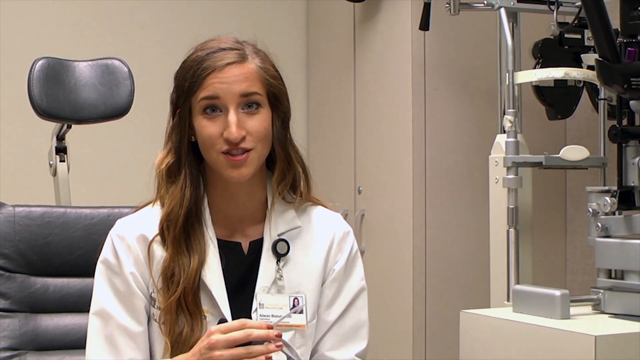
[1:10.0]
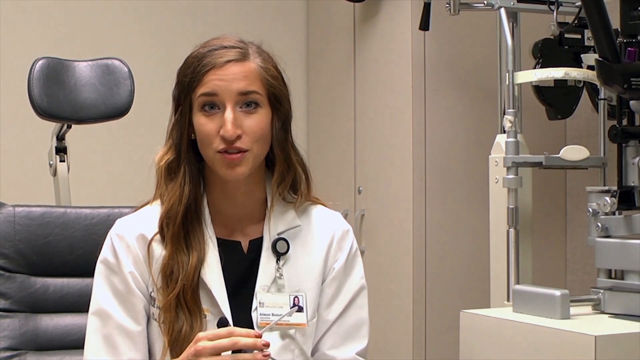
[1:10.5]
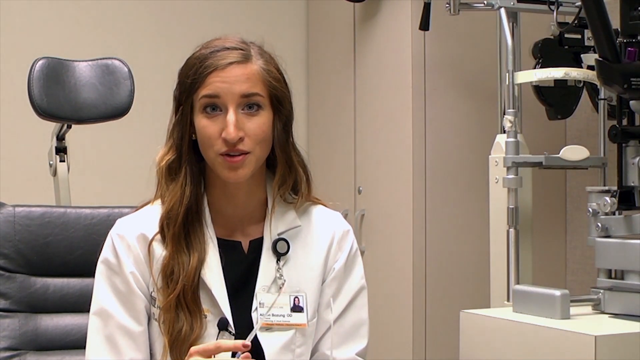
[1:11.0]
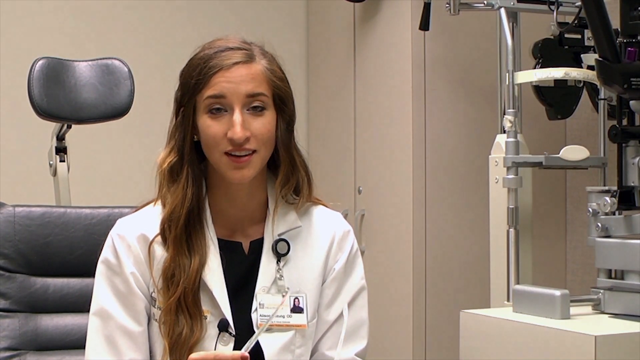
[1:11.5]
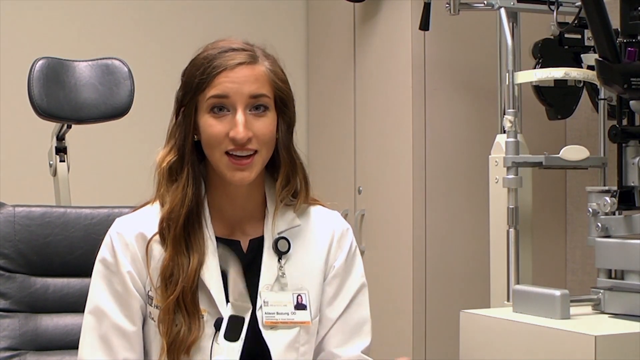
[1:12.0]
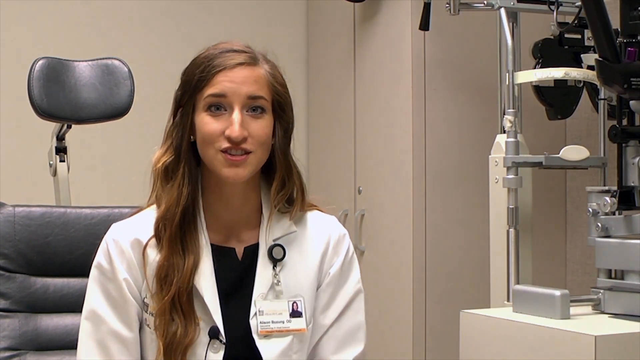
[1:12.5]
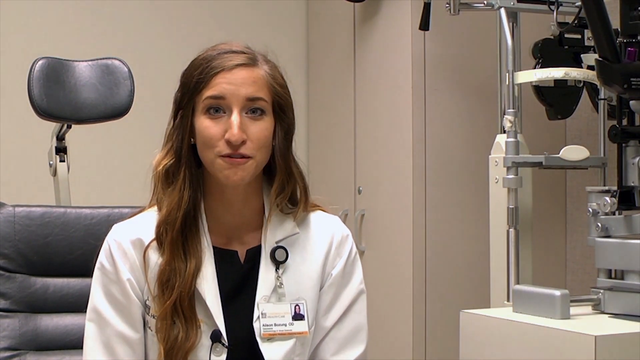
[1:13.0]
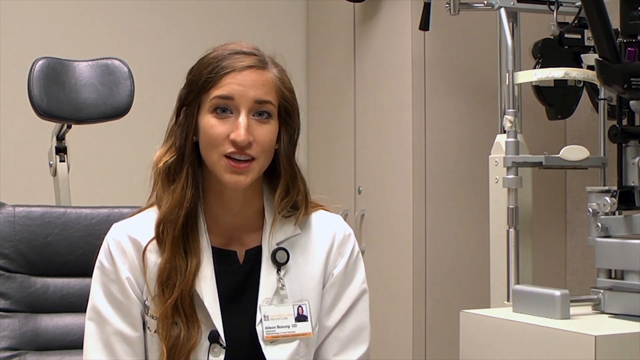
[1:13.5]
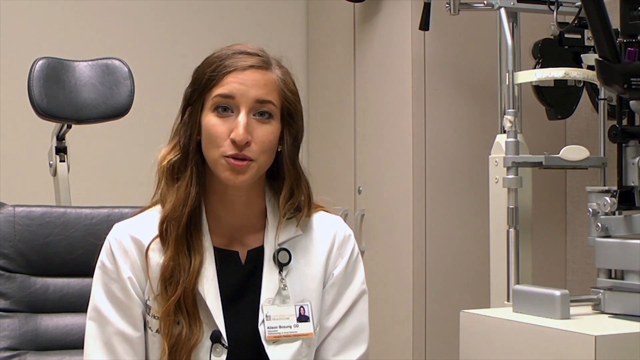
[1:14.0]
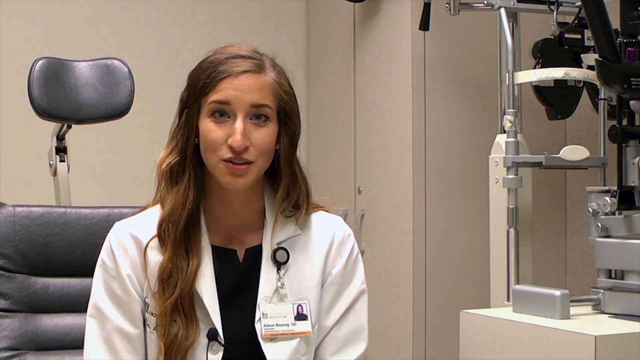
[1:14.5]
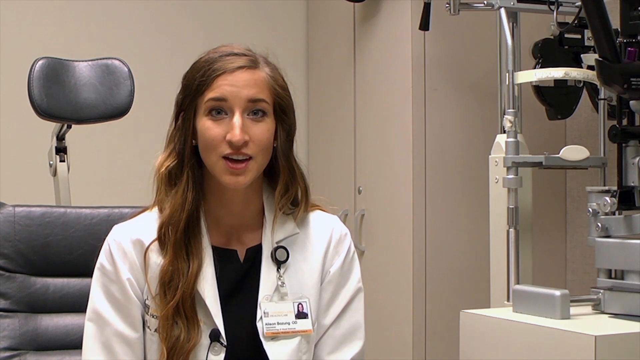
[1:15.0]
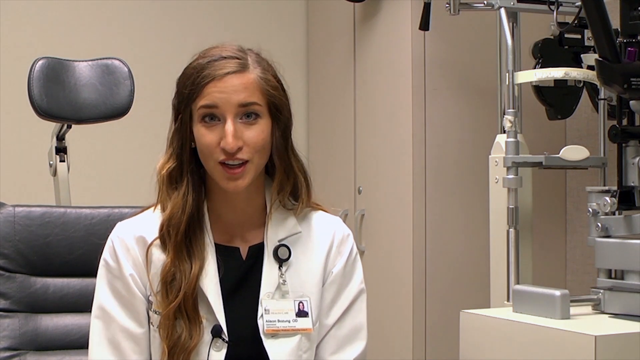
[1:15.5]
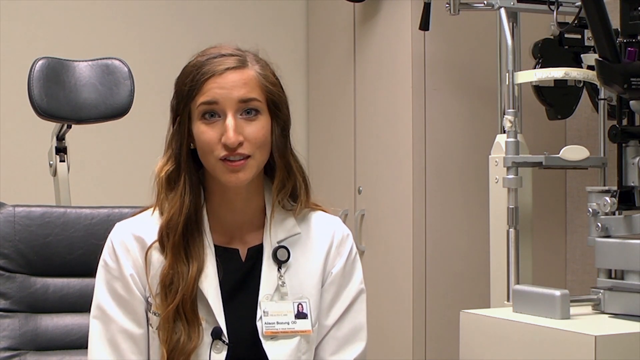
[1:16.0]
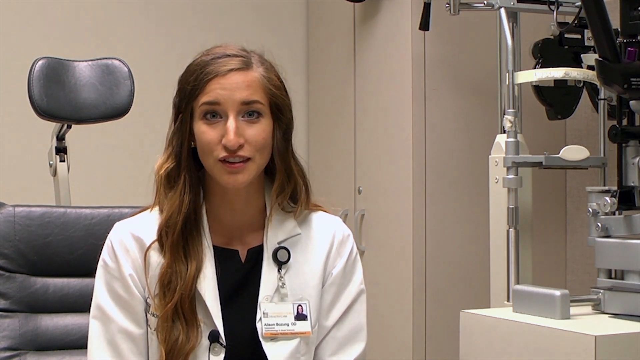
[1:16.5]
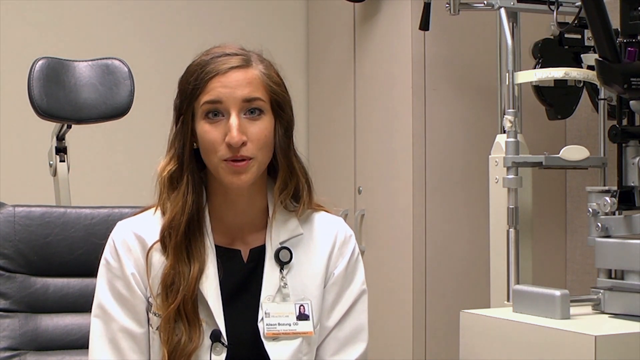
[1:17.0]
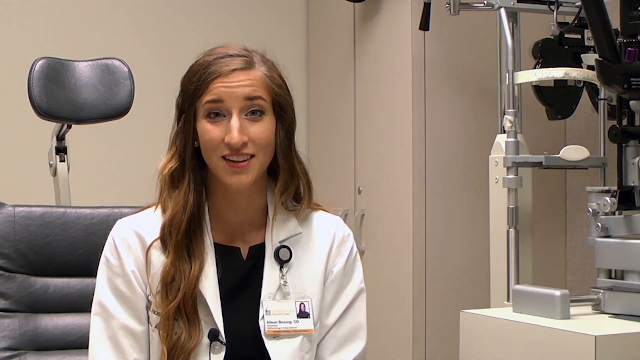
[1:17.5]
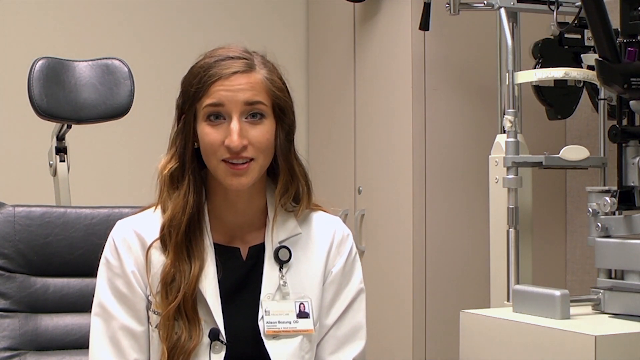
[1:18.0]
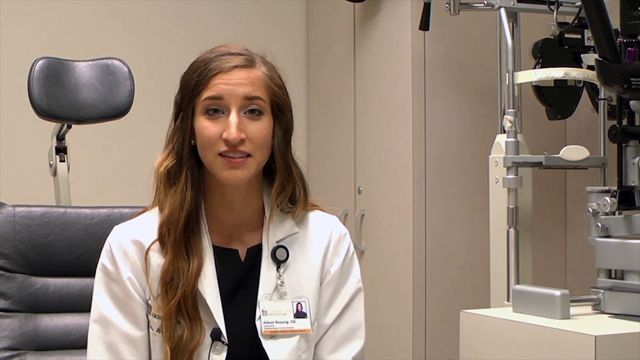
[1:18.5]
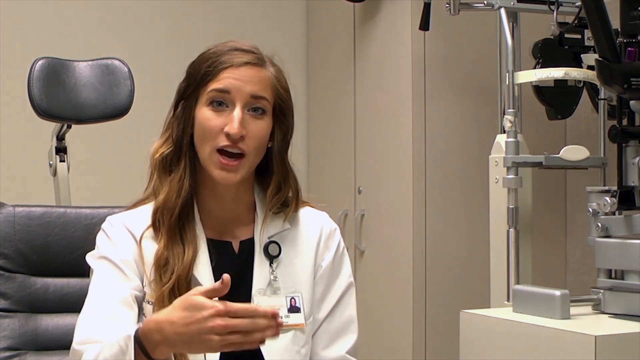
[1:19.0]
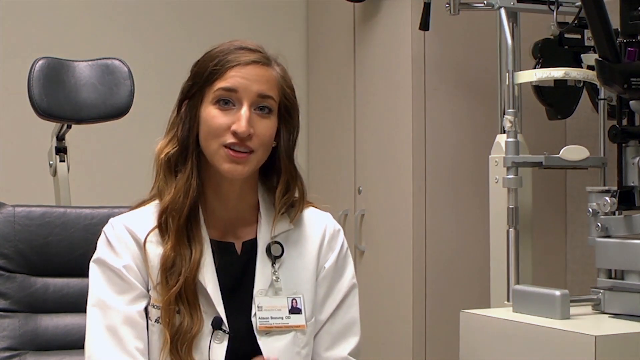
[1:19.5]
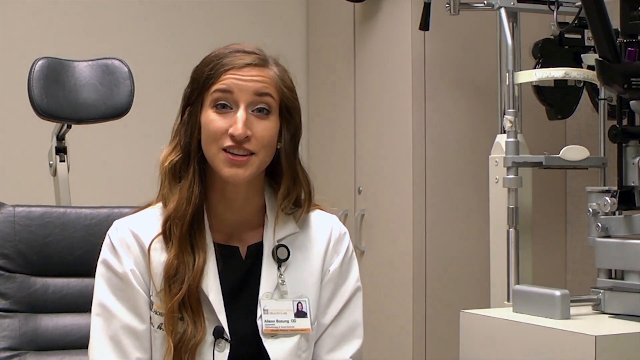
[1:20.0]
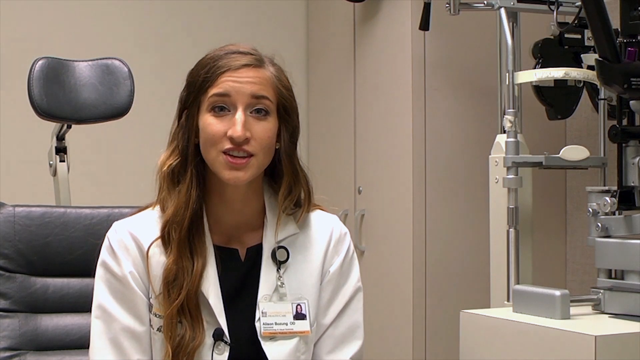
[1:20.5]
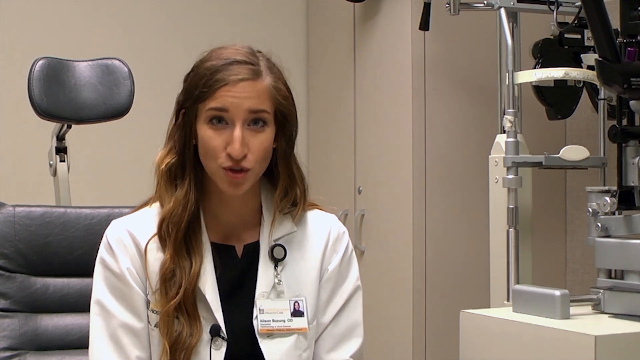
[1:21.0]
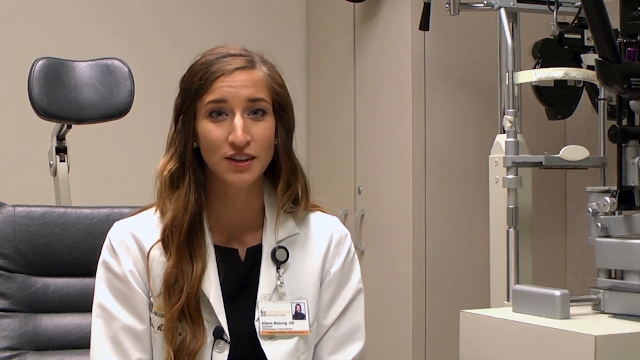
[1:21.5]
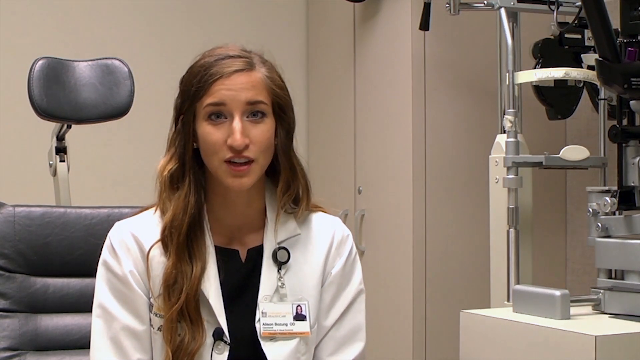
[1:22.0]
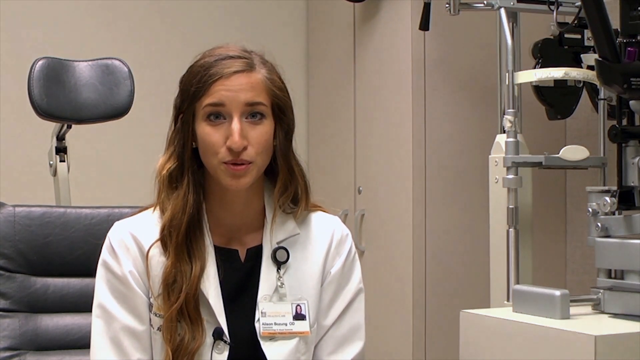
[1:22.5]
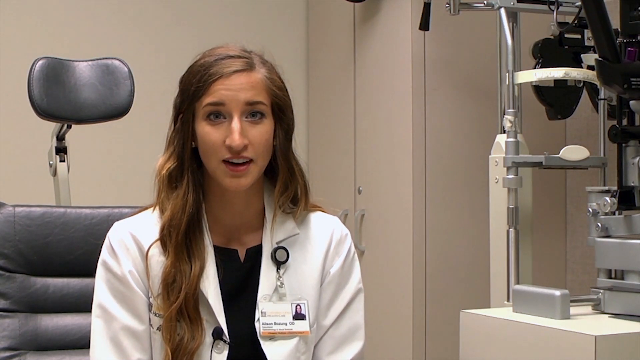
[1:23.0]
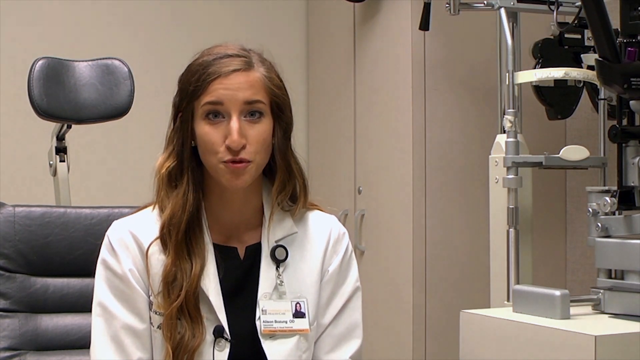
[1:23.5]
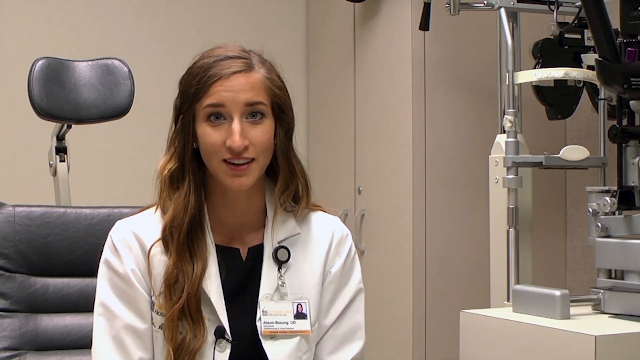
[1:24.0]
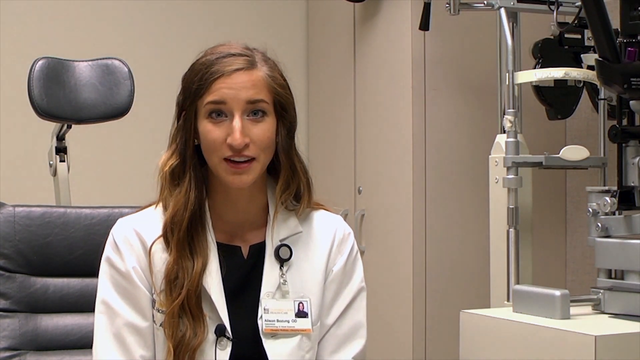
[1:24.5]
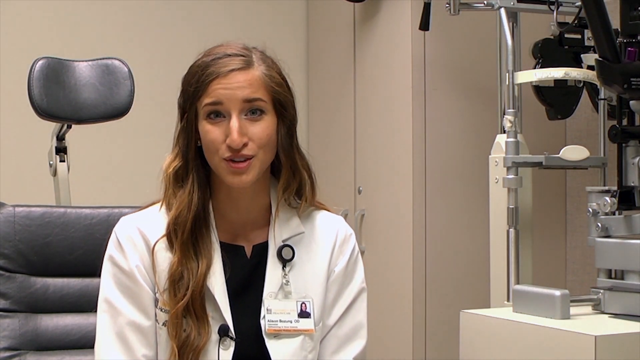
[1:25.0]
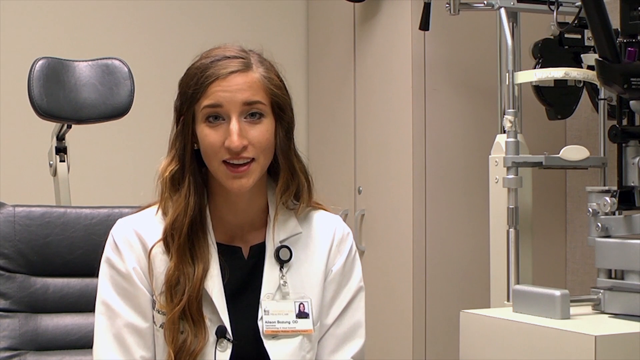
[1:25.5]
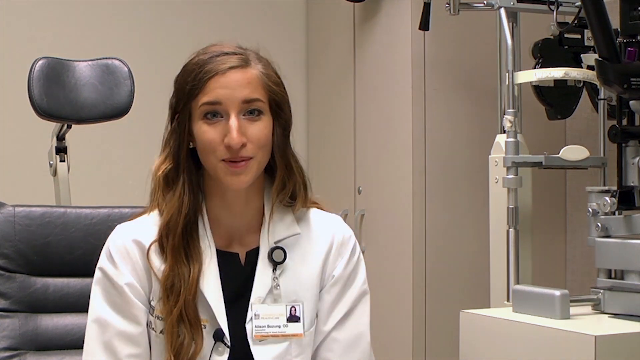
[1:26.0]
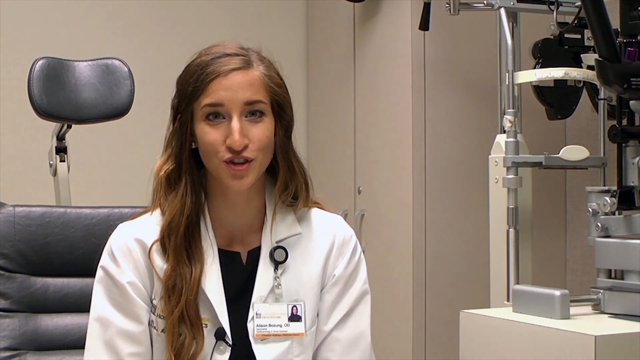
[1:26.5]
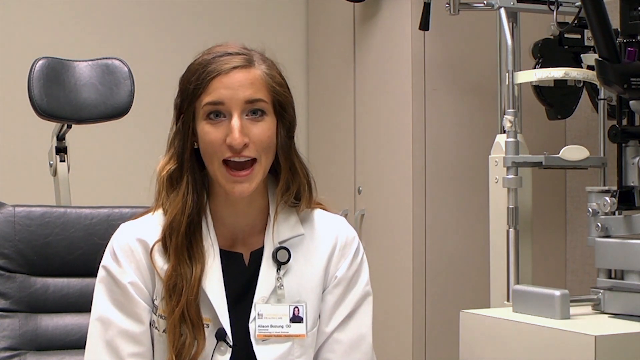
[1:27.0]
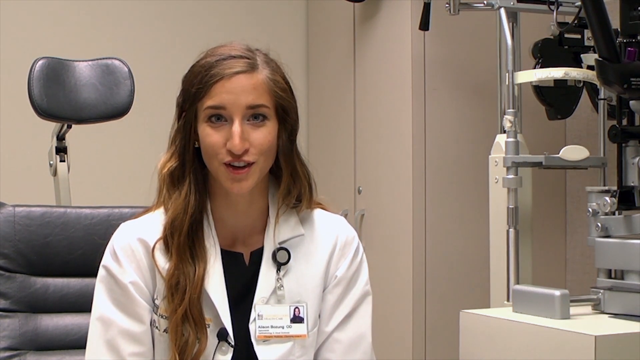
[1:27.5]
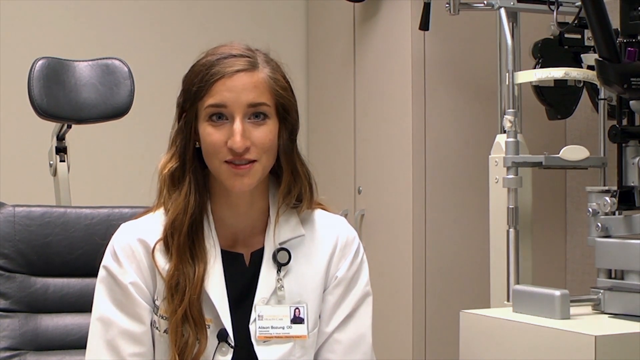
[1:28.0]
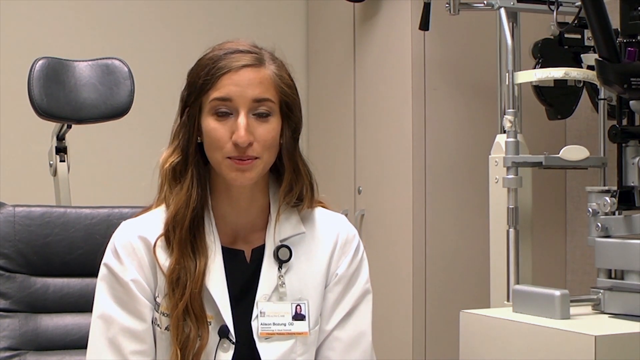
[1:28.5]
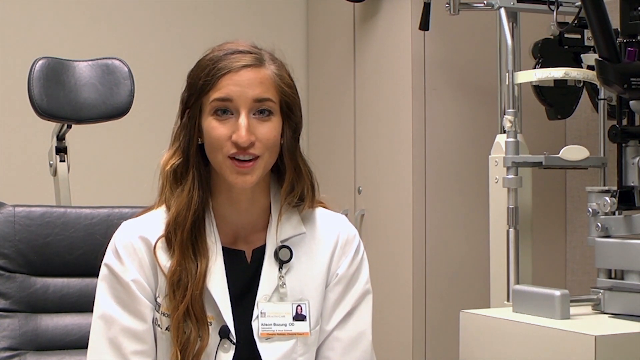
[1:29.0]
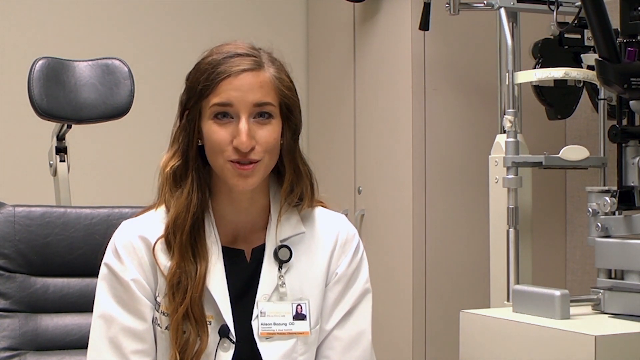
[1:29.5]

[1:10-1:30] A female ophthalmologist faces the camera, talking about solar eclipse glasses. She holds the glasses in her hands, mostly on her lap, and gestures with her right hand, which has burgundy red nail polish. Her light brown hair is parted on her left side and combed over to the right. She is seated in a leather exam chair with an adjustable headrest, and to her right is ophthalmology exam equipment in white, black and silver metal. The room behind her is a light tan tone. Just behind her left shoulder is a double-doored closet with two gray pull handles and a round lock above the handle on the right-side door. Embroidery on the upper right breast pocket of her lab coat states the ophthalmology practice the doctor works at.